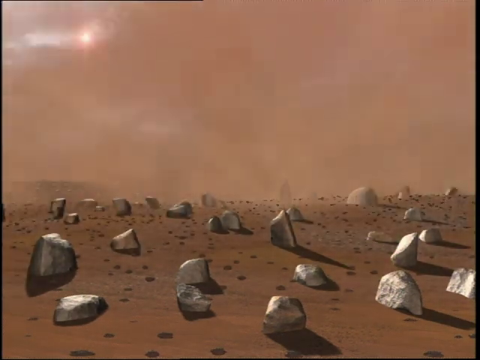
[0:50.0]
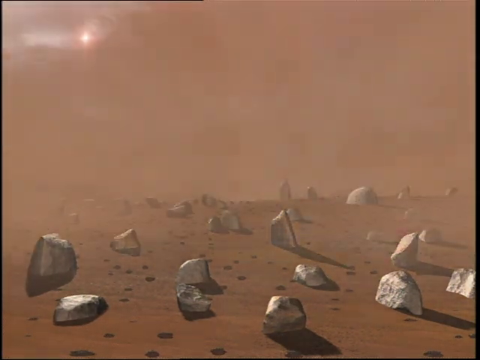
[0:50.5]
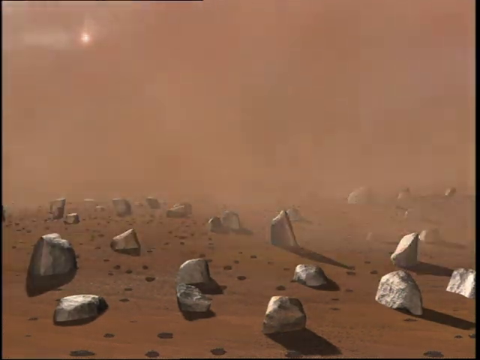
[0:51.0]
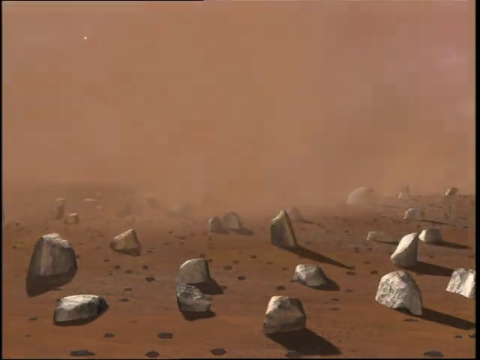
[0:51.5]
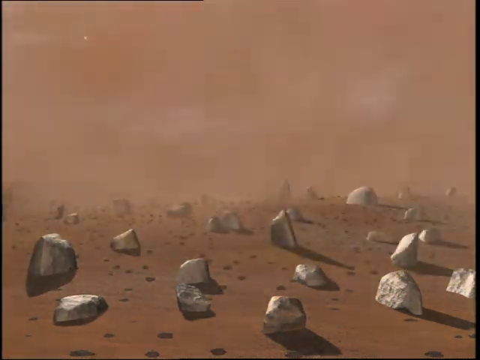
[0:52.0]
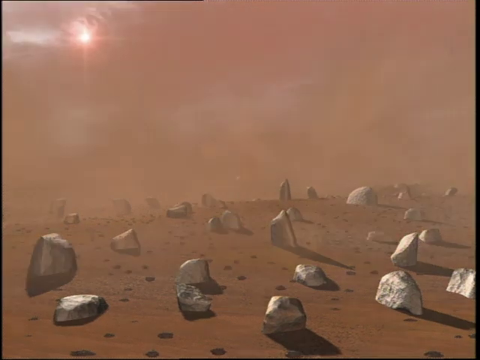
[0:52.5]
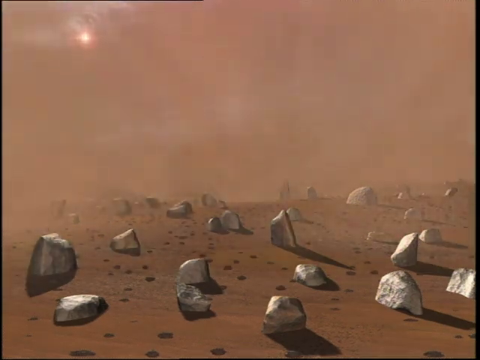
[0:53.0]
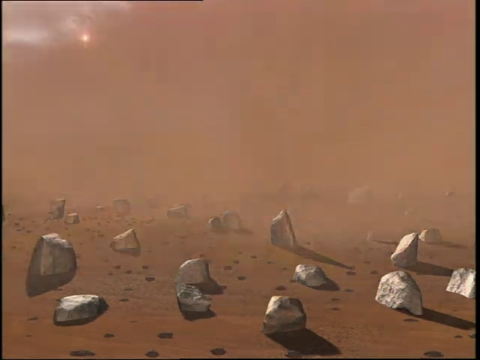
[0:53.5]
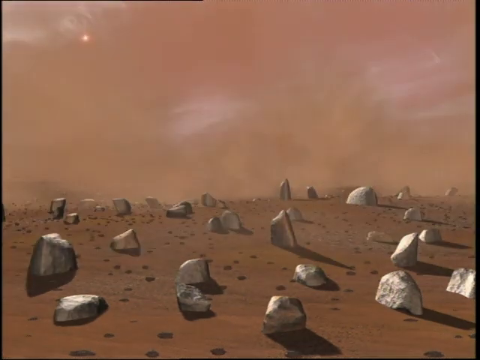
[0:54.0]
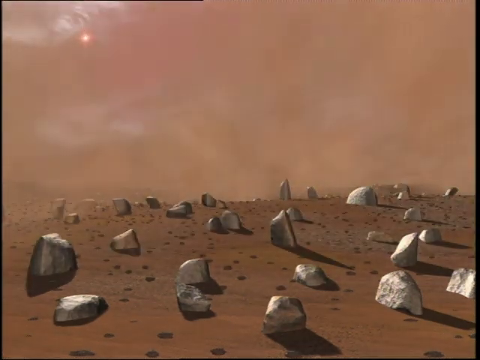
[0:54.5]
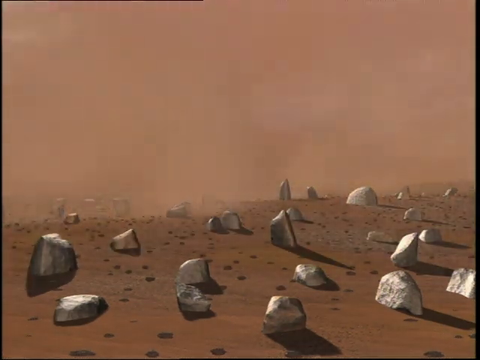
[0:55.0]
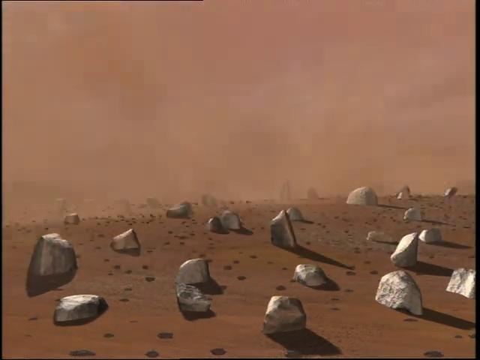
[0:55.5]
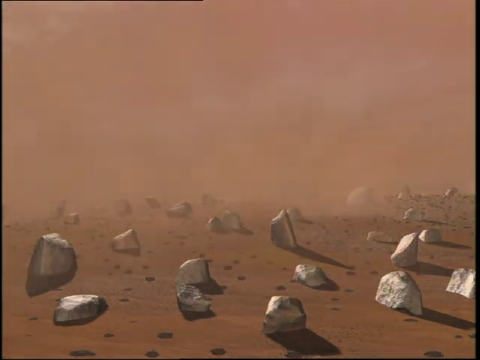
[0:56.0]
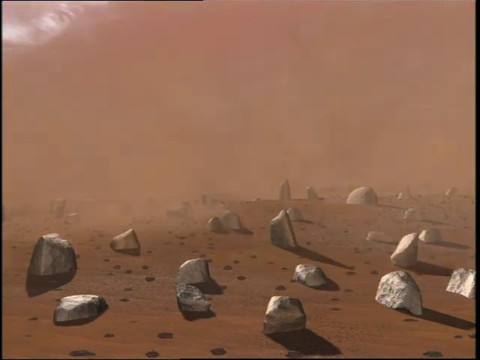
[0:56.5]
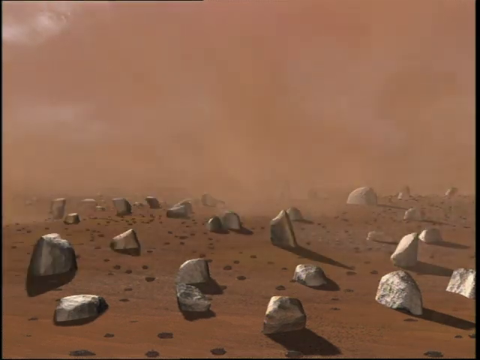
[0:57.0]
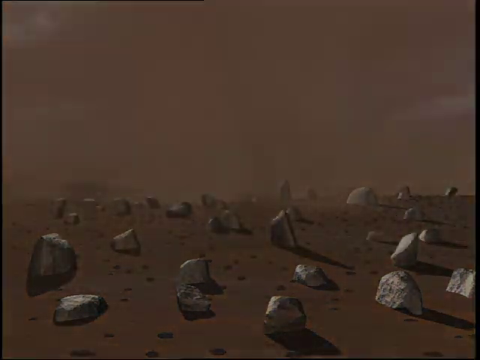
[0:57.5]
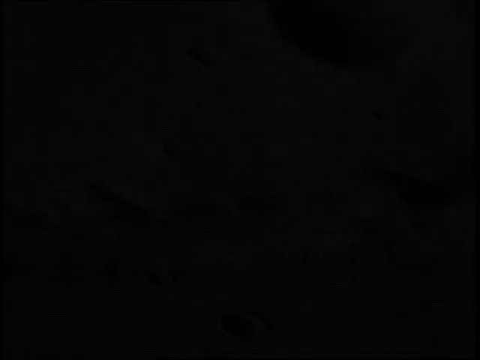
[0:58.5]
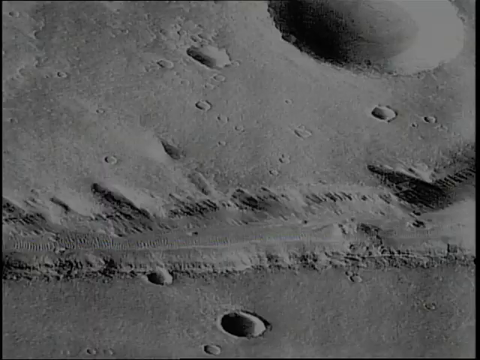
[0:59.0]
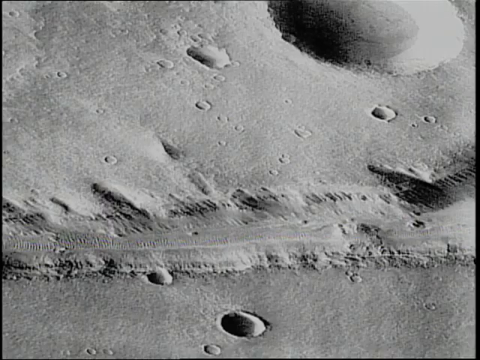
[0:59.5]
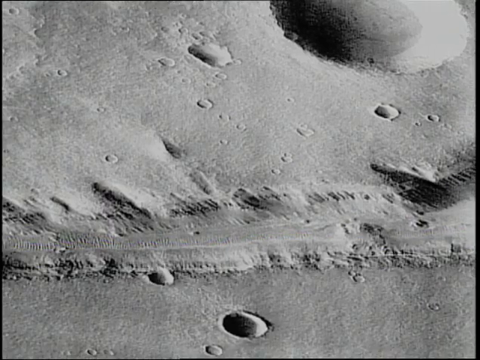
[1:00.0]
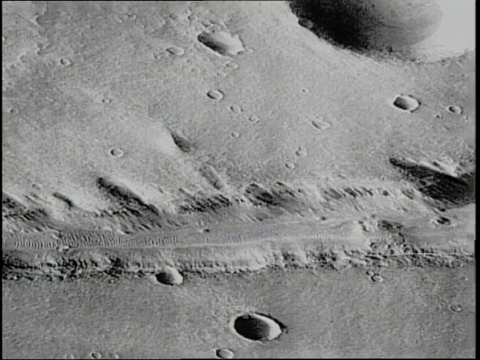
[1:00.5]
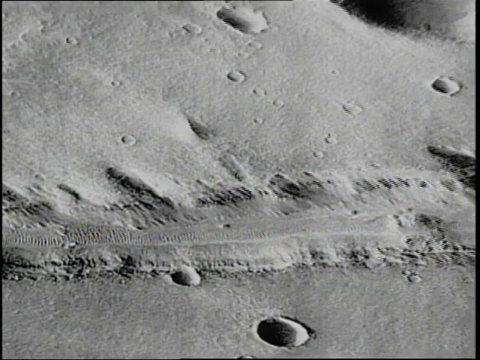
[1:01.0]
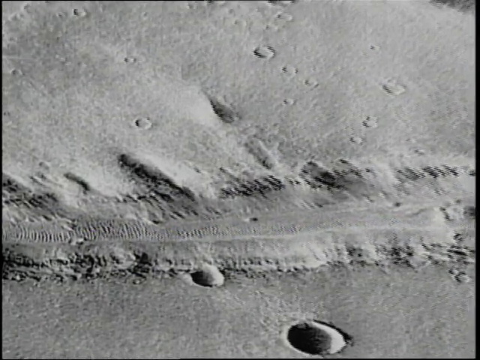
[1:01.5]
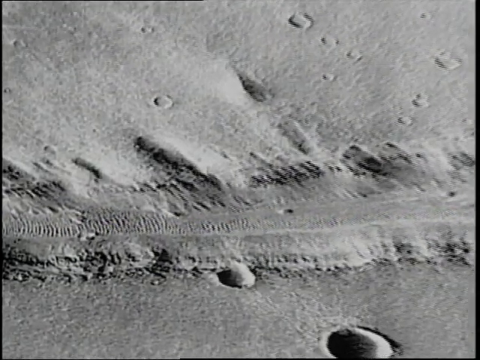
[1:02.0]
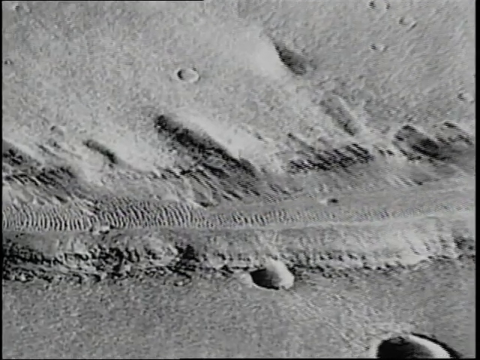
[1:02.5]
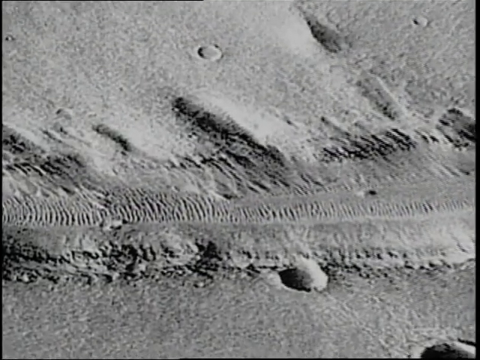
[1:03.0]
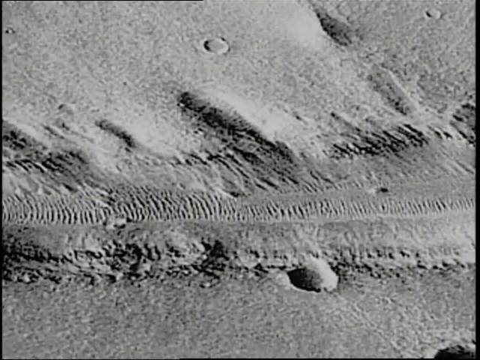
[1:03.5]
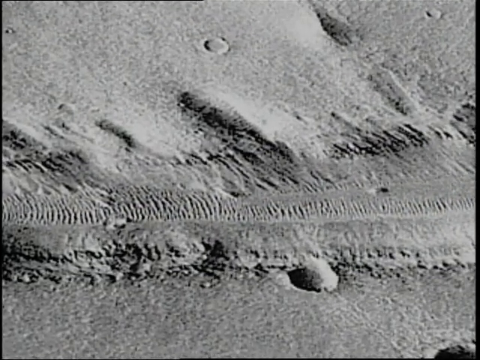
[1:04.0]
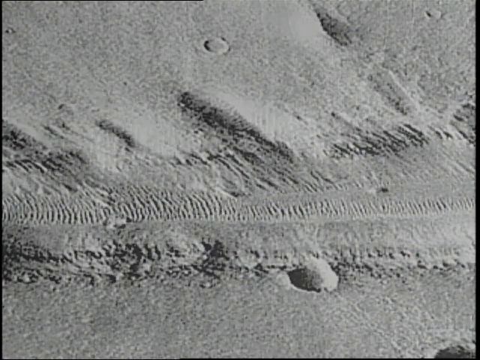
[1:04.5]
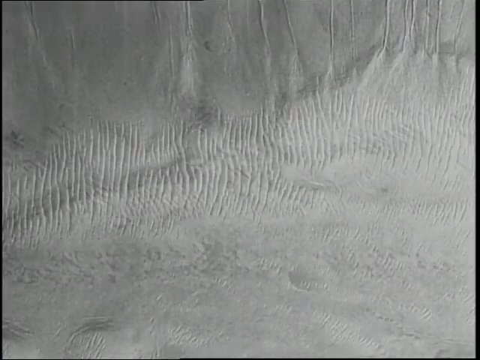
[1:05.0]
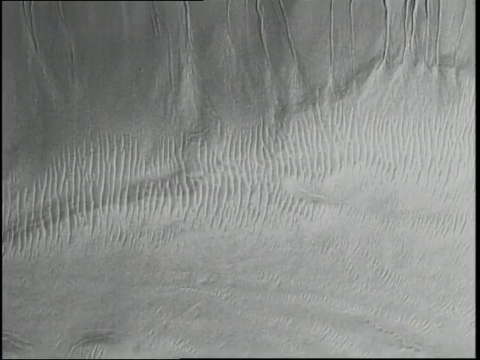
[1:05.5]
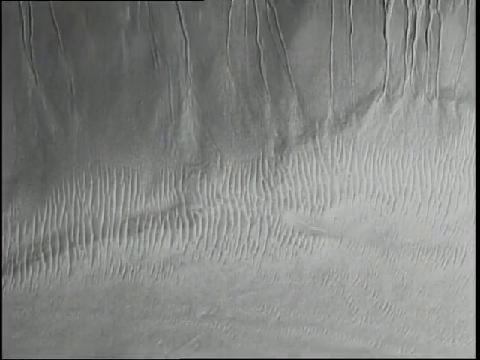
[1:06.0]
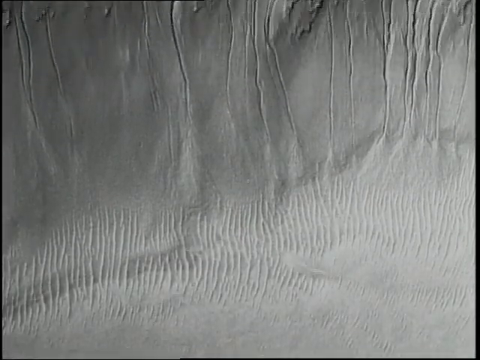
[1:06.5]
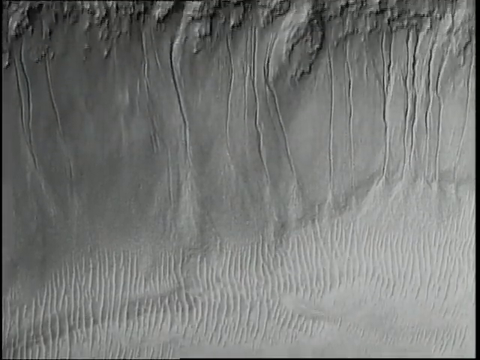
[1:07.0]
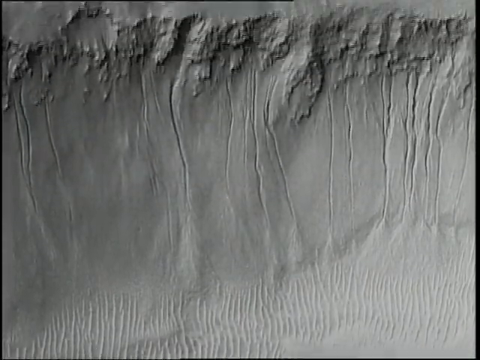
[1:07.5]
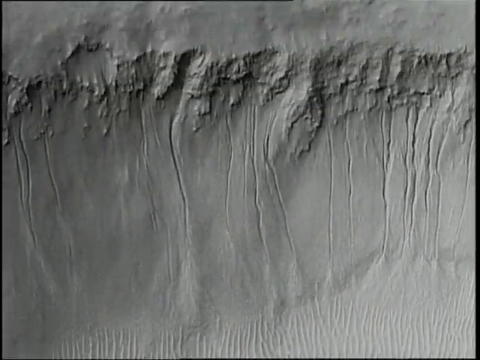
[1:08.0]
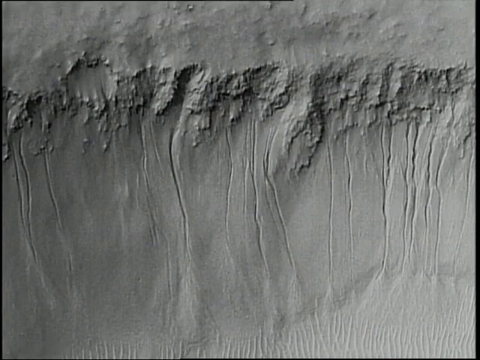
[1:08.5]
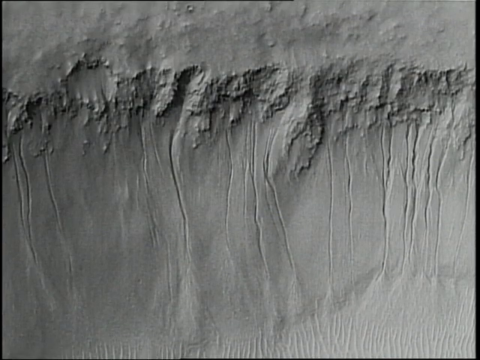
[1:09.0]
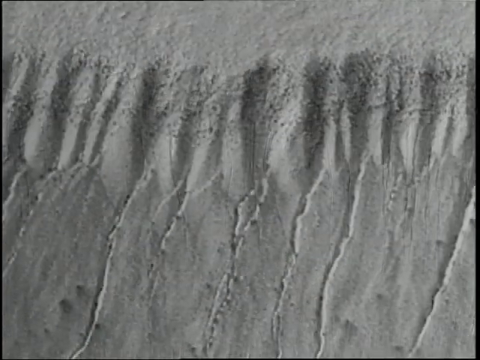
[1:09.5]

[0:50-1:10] A landmass resembling a desert has deep reddish brown soil, and the sky also has a reddish hue. Silvery rocks are strewn all over the landmass, and very fine reddish sand is blown over the land toward the camera for a couple of seconds. The scene then transitions to what looks like a black and white image of another landmass that appears to have craters of different sizes; the most prominent crater is in the upper right corner, and there are about 10 other smaller craters. The camera zooms in to what look like weather-beaten or erosion marks on the landmass, then pans upwards to show more of the eroded area, which looks as if the wind has stripped off the topsoil. Vertical lines that look like grooves run across the landmass in that area.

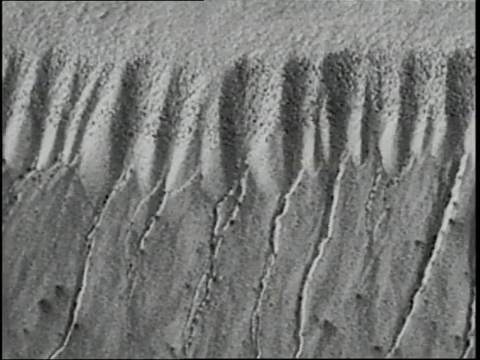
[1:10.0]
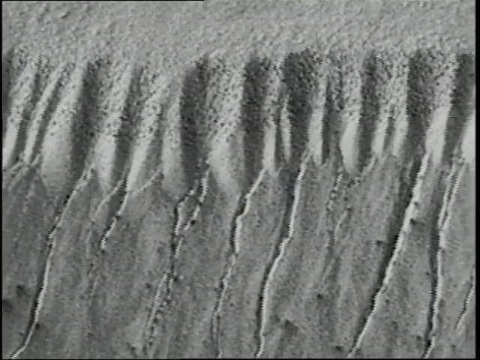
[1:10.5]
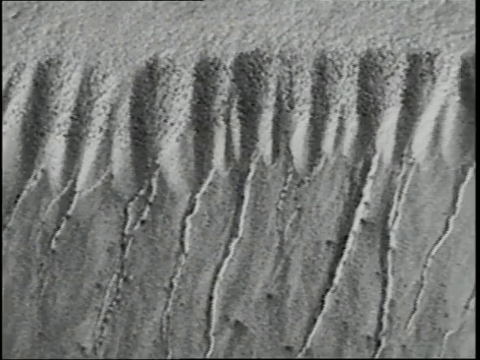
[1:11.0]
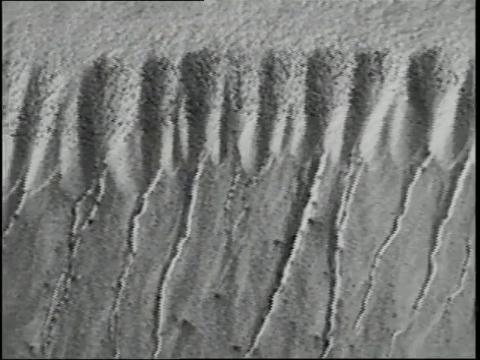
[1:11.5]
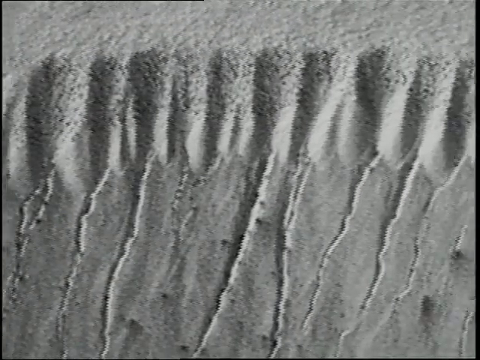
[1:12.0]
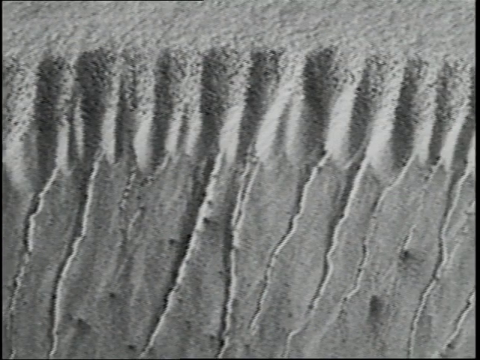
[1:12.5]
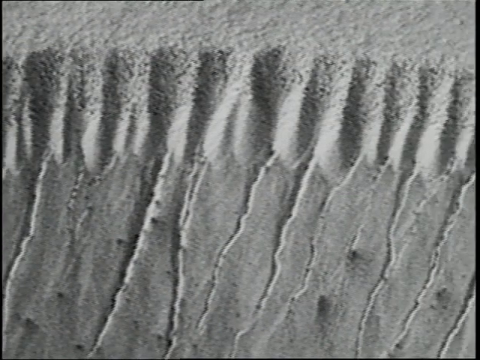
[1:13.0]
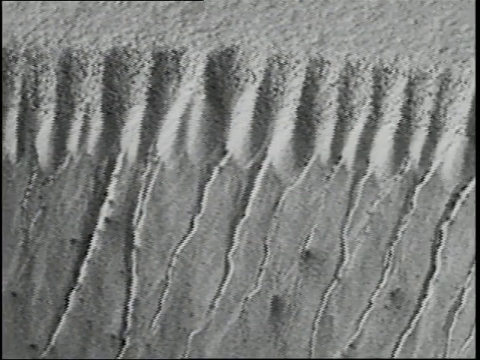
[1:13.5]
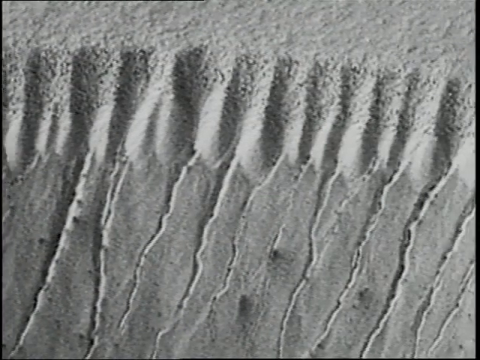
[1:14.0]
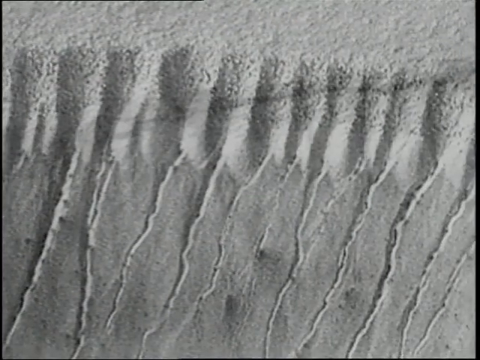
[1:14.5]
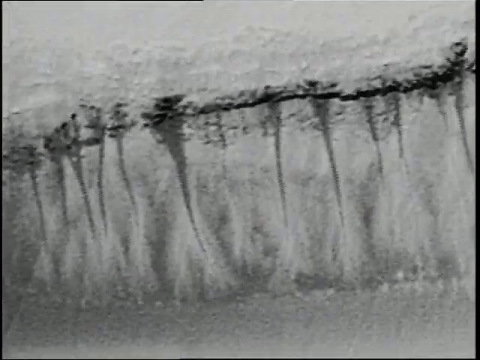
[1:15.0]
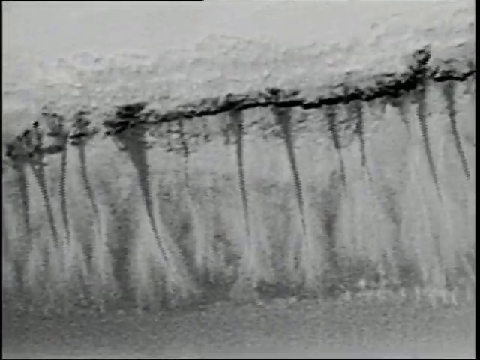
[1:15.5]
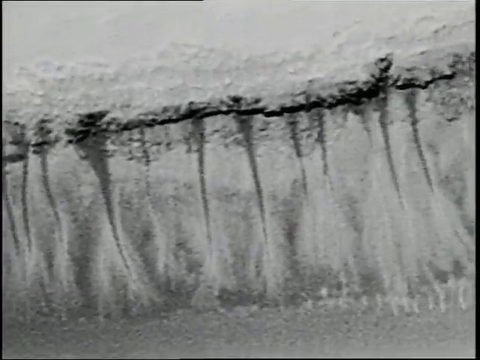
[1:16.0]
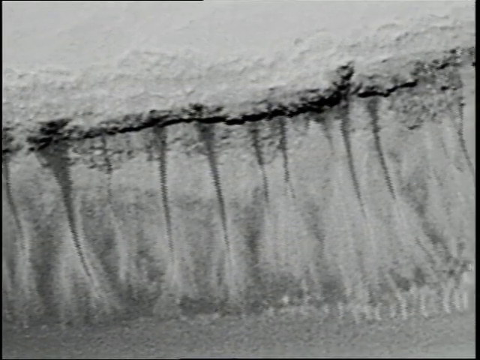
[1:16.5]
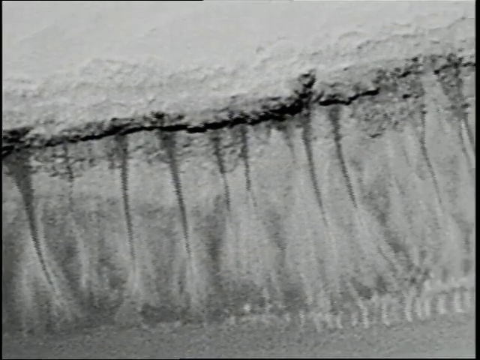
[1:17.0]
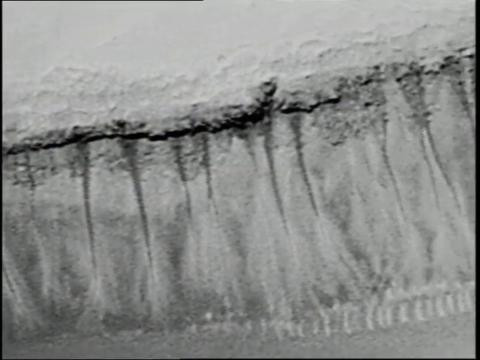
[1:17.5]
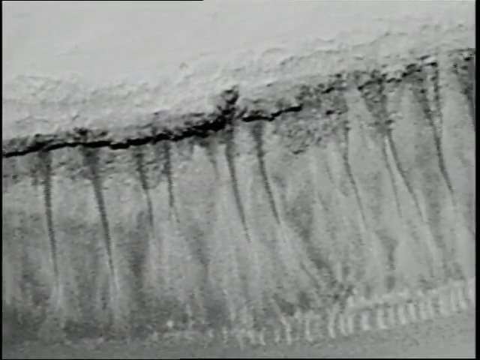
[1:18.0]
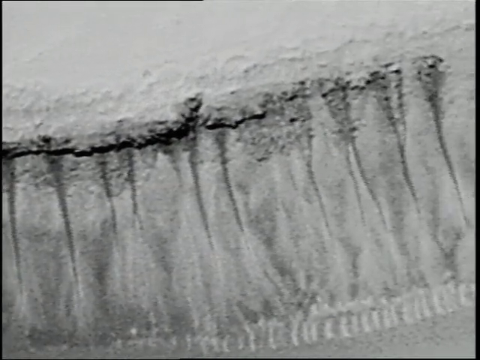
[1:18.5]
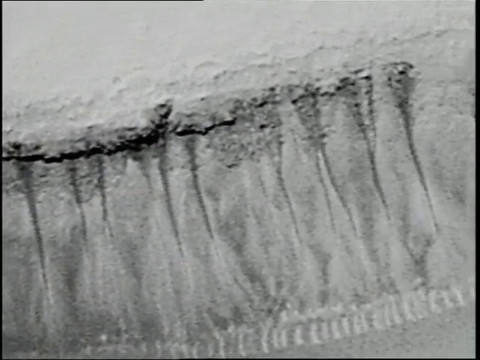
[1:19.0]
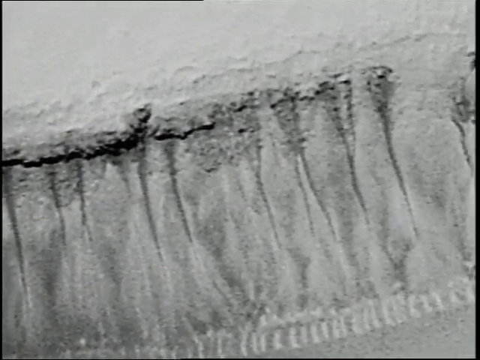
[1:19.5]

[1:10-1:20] A close-up aerial view shows a landmass in a black and white, or grayscale, image with some vertical grooves. The camera pans to the right, revealing several vertical grooves in the landmass running side to side. Another view shows more vertical marks, as if looking at the edge of a cliff that has been eroded; exactly what this is is difficult to tell because of the grayscale image.